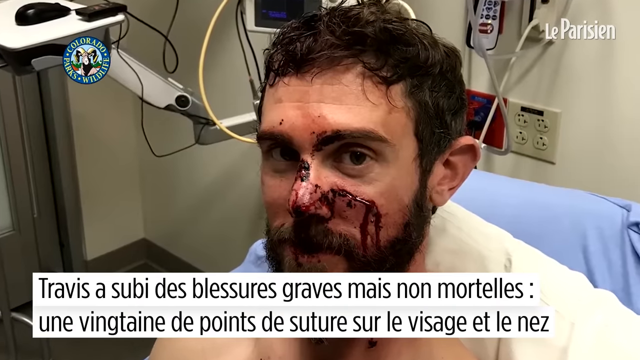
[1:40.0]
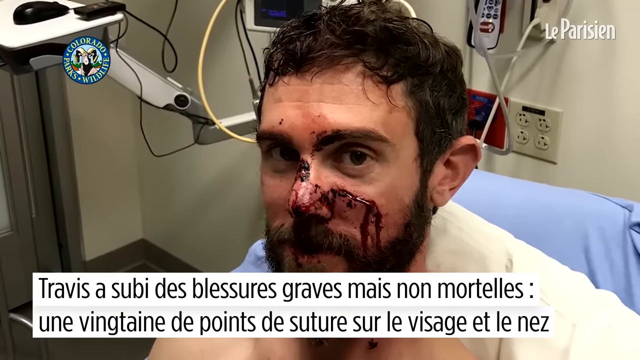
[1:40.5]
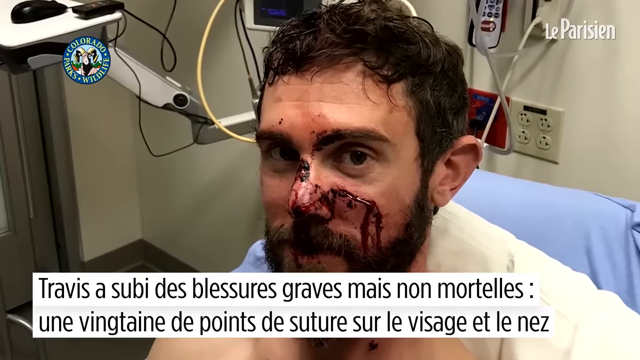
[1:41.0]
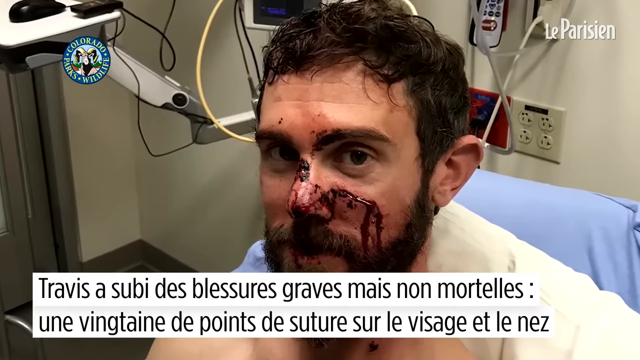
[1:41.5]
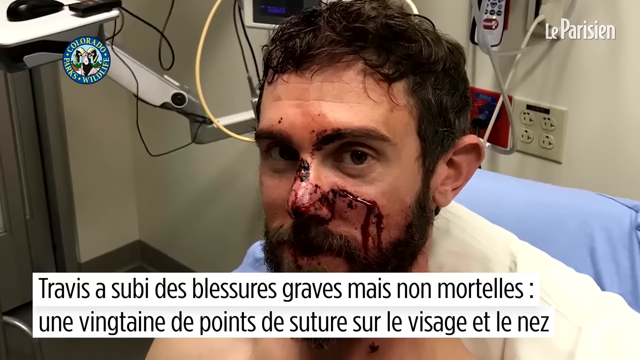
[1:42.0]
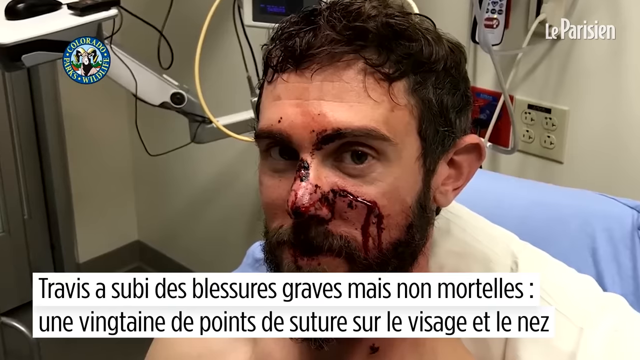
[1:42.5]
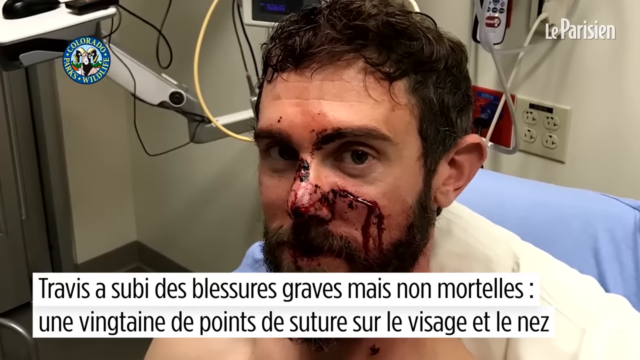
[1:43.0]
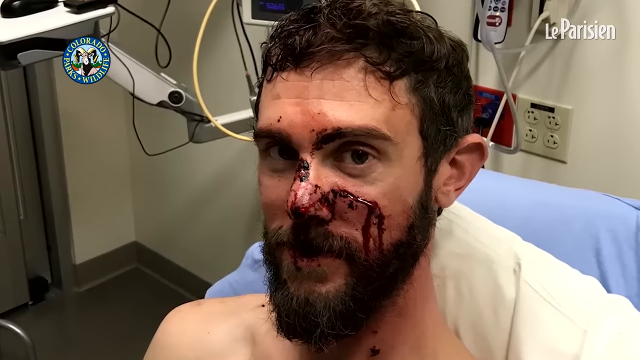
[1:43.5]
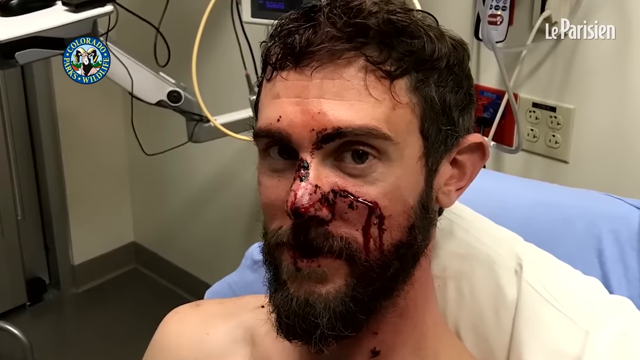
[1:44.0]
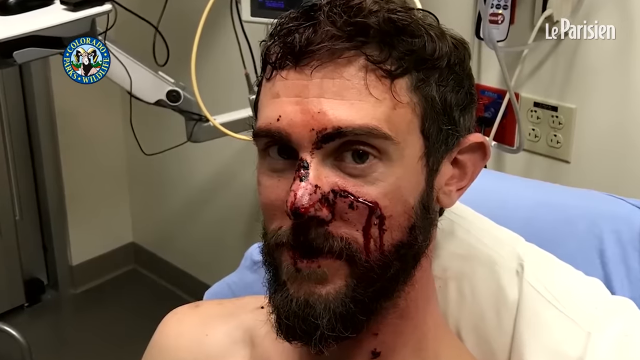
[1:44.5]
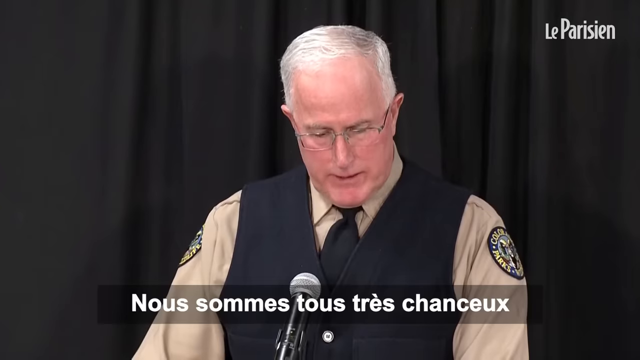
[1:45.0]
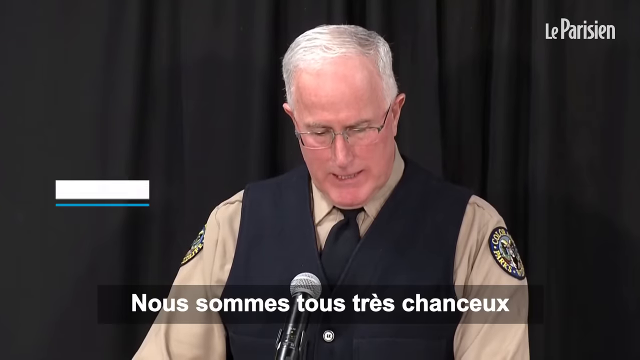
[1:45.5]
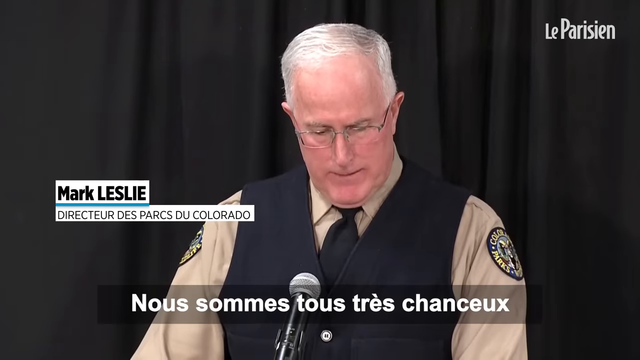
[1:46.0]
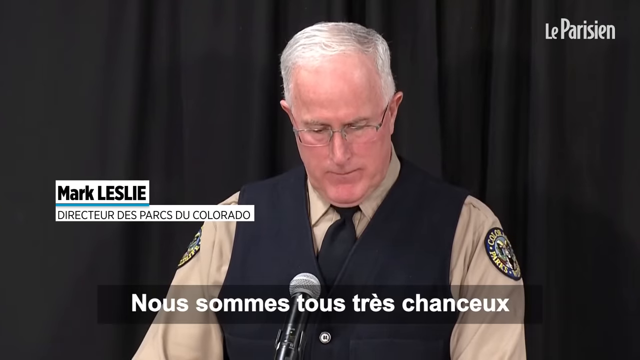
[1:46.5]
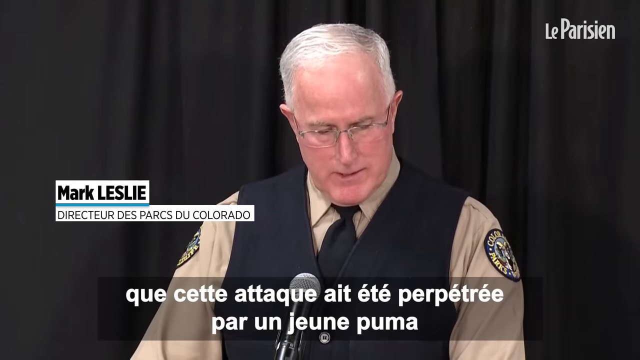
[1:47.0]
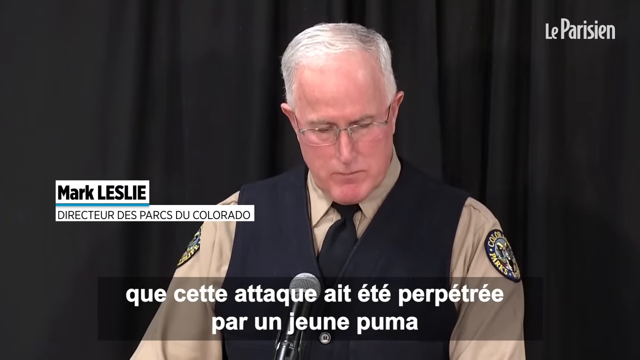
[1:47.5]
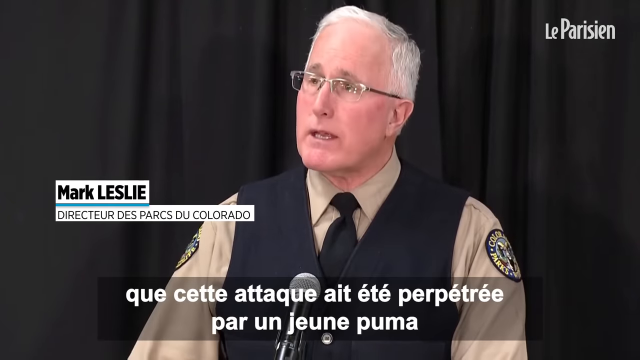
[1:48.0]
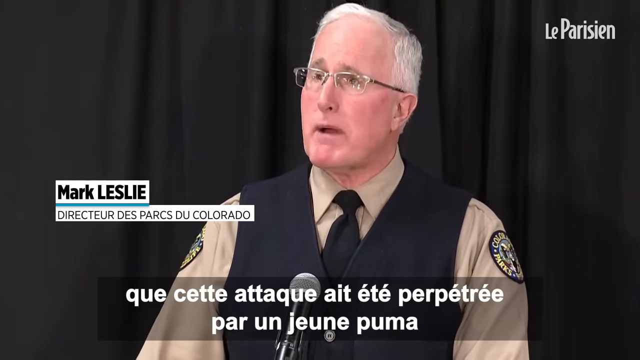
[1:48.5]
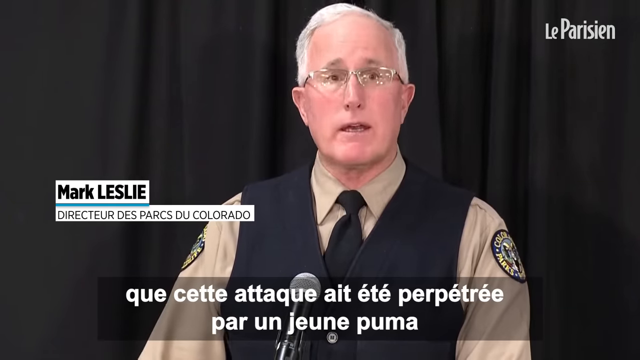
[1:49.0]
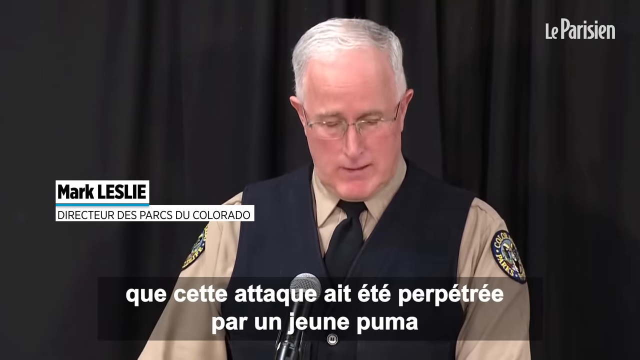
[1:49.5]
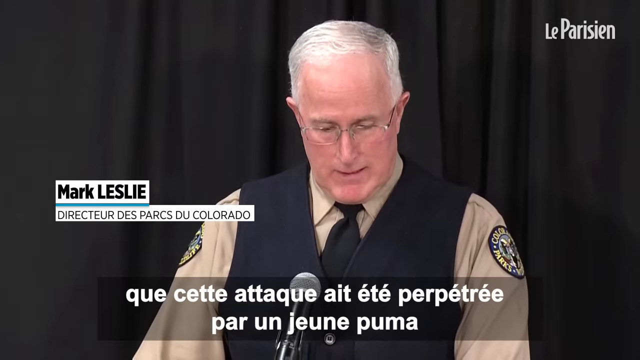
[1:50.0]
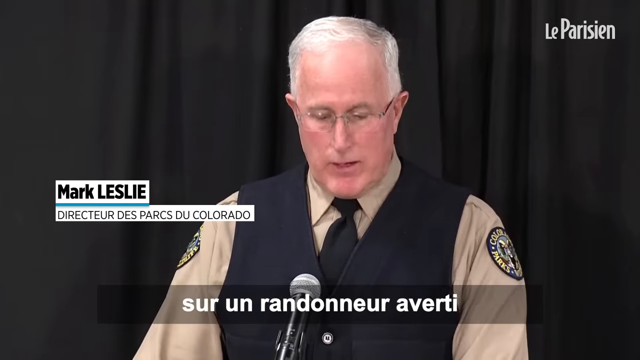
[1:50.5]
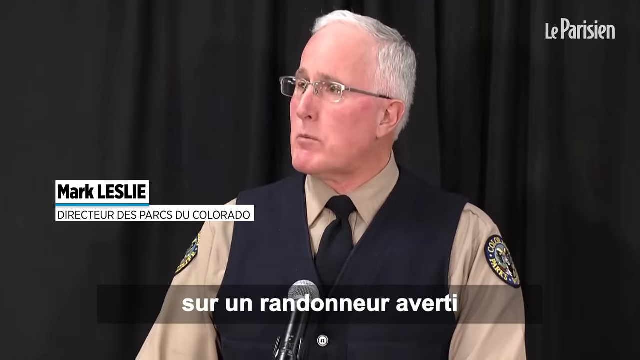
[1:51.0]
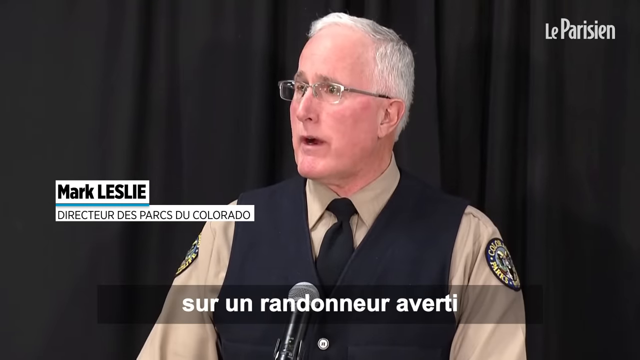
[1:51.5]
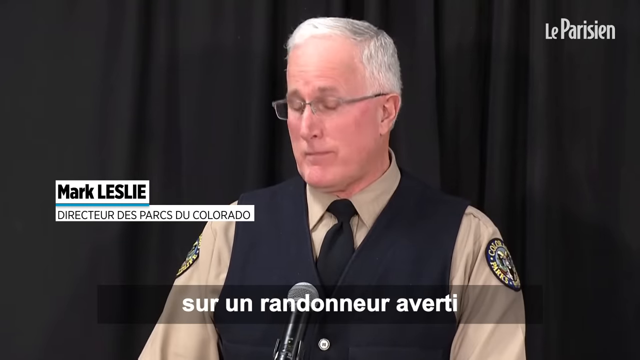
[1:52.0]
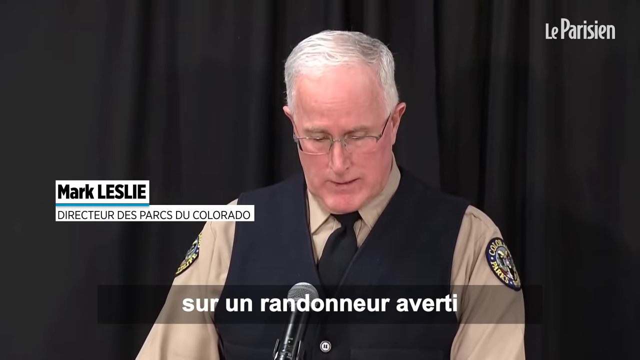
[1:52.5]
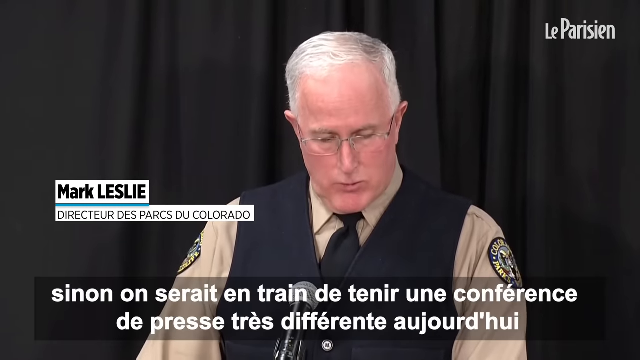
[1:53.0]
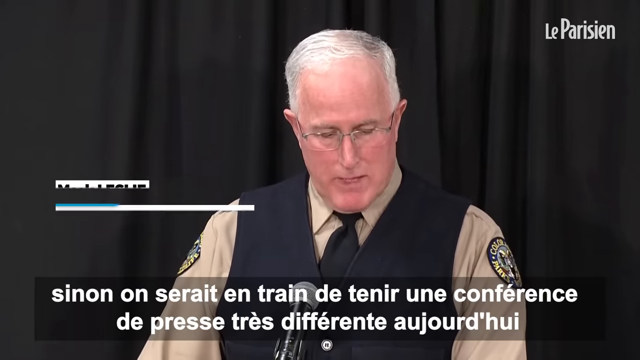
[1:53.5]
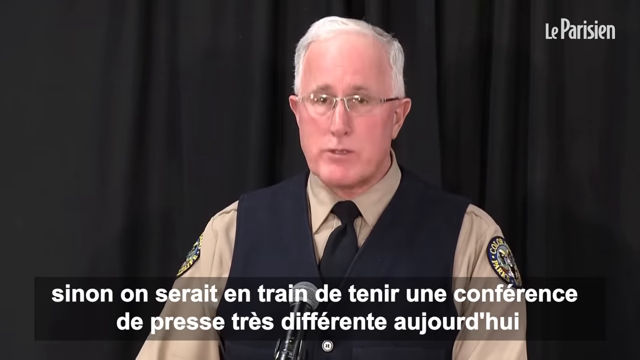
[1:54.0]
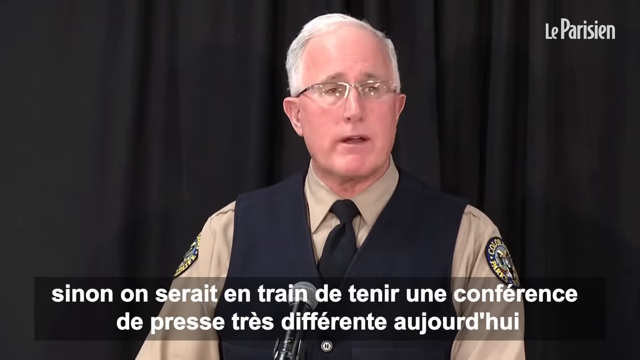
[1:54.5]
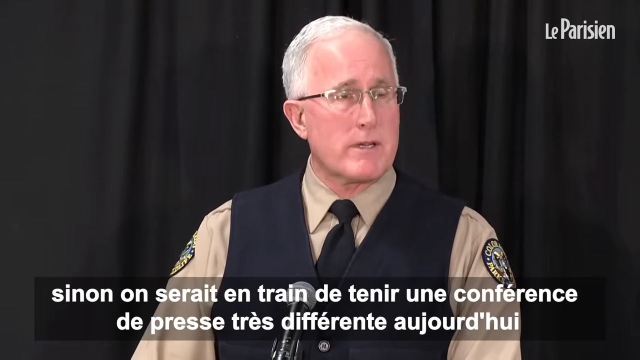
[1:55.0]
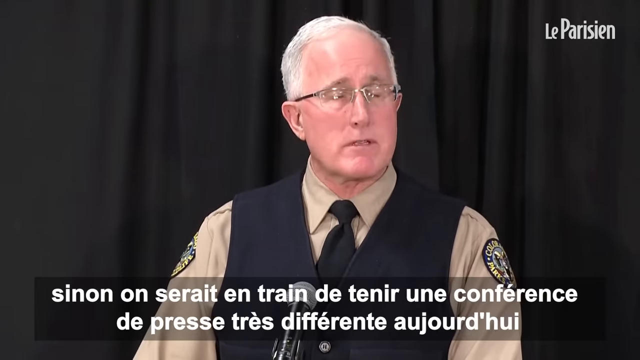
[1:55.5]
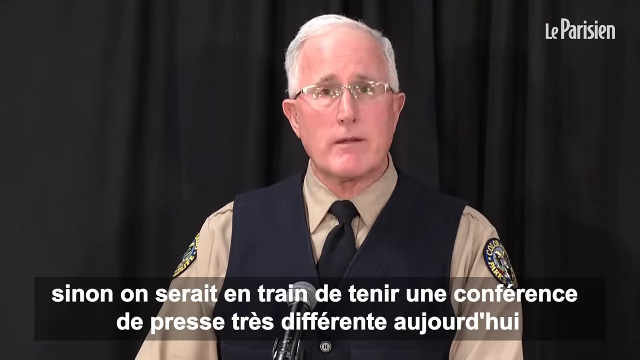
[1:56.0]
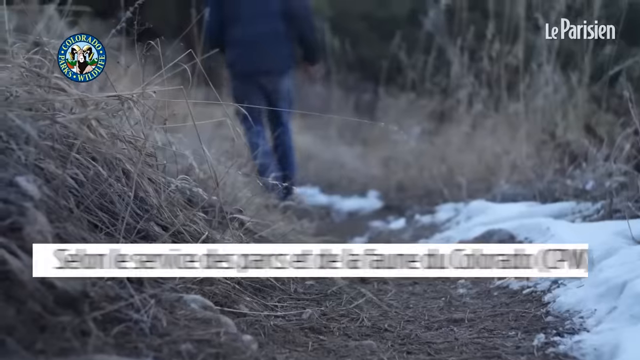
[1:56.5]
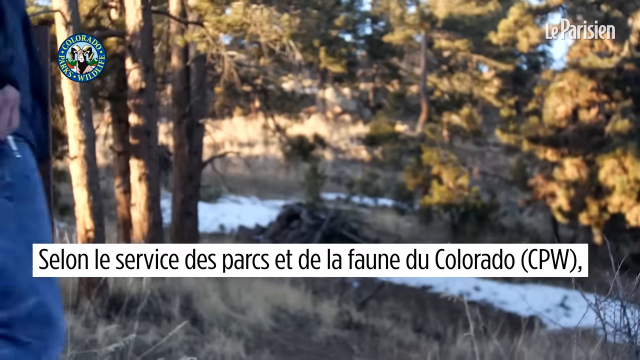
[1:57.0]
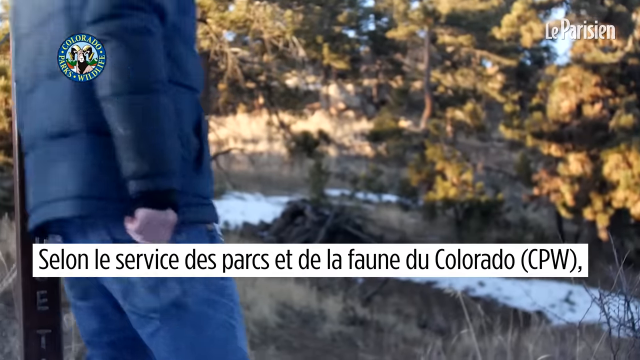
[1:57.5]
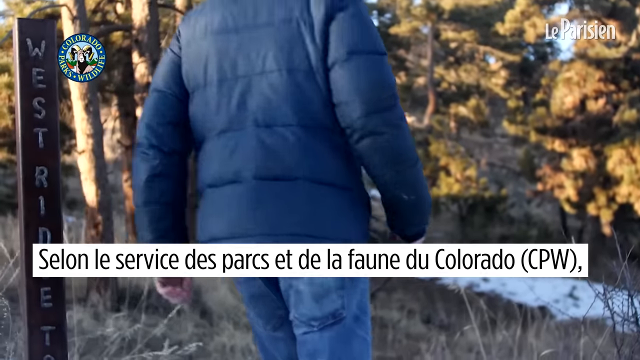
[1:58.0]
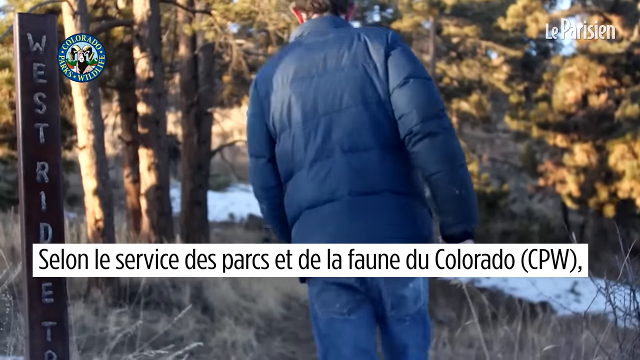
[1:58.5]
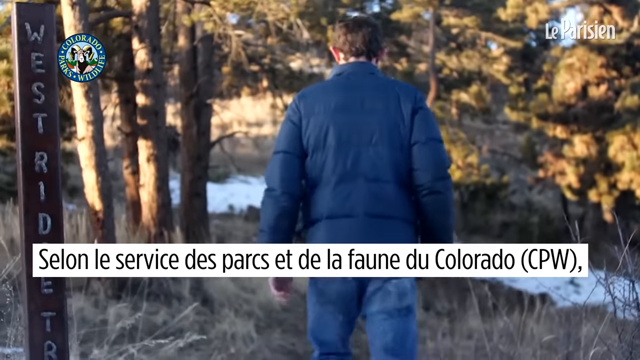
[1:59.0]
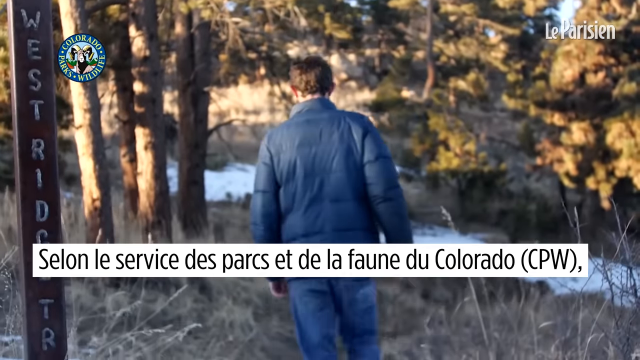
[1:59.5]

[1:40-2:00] A picture shows the man in a hospital bed with blood on his face, looking into the camera. Behind him are various cords, a 2x2 outlet, and some machines with wires to his left. Beneath him is bedding with a white section and a light blue section. He has short brownish-blackish hair, a mustache and a beard, and blood all over his nose and cheek, dripping down. Black text on a white background is at the bottom of the screen, and the camera slowly pans into the picture. The scene changes to an old man with white hair speaking into a microphone. He wears a brownish uniform with a black vest over it and a black tie. A label says "Mark Leslie" with some French text underneath. Subtitles in white text on a black transparent background are at the bottom of the screen. The man talks, blinks and looks around the room.